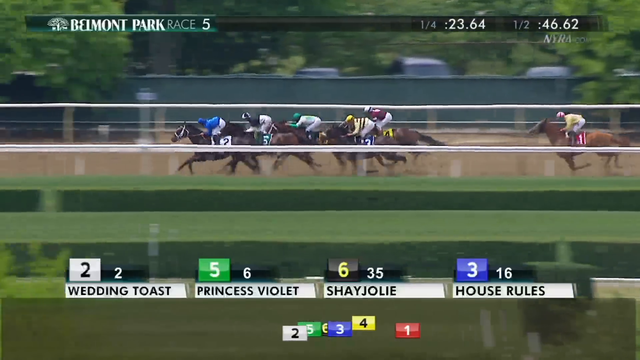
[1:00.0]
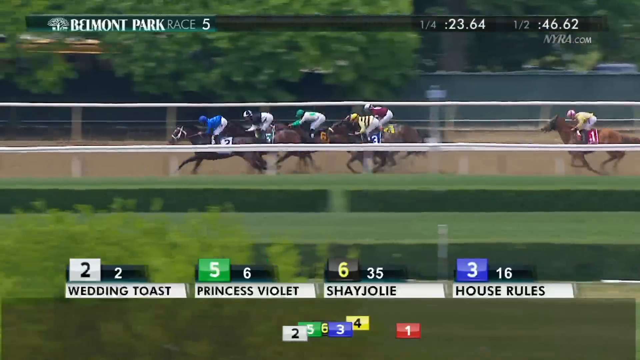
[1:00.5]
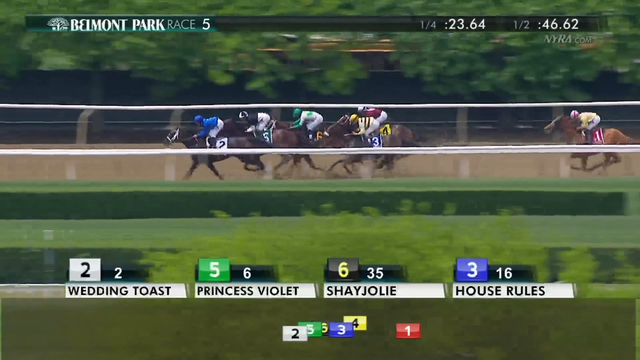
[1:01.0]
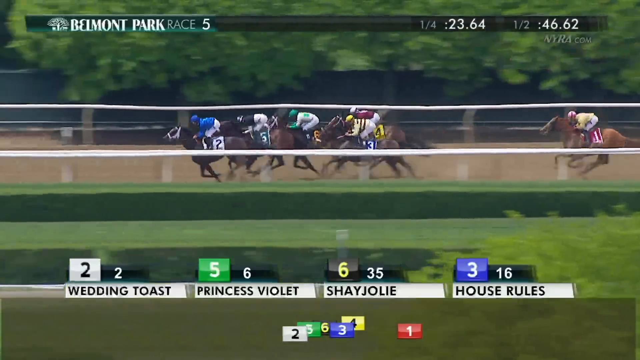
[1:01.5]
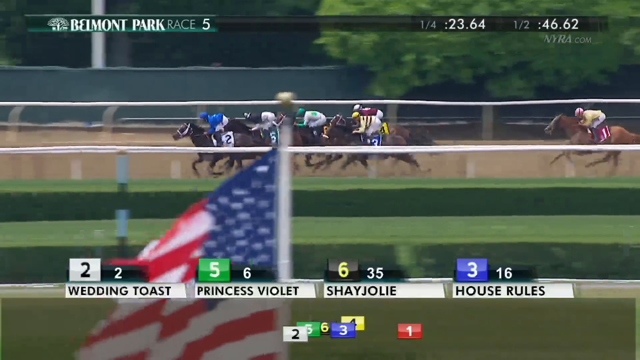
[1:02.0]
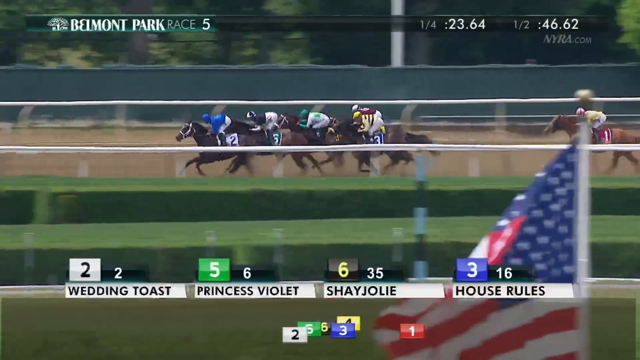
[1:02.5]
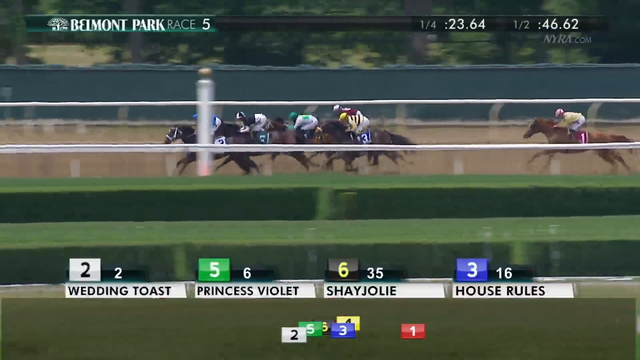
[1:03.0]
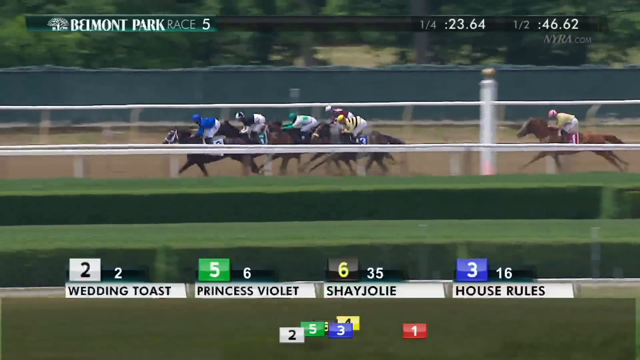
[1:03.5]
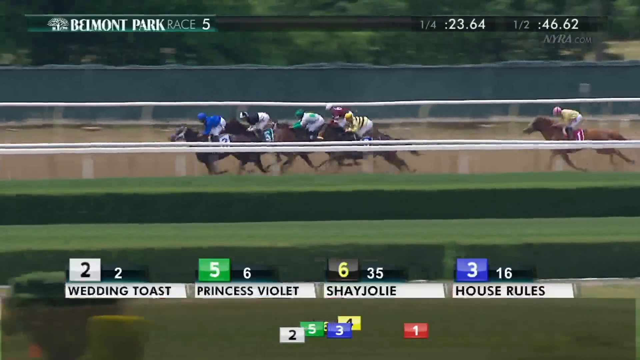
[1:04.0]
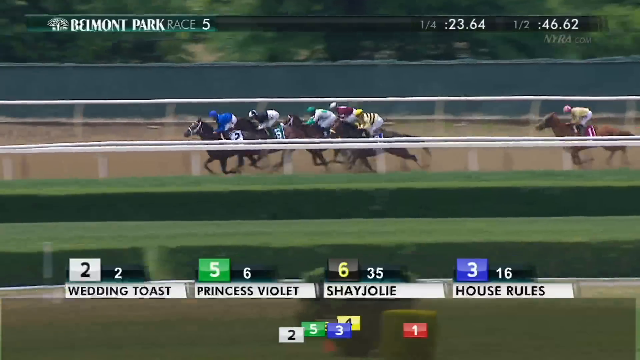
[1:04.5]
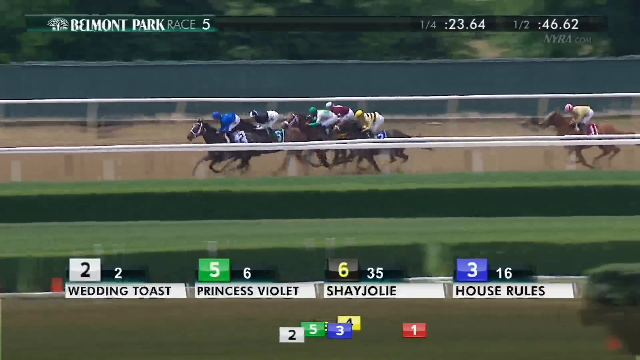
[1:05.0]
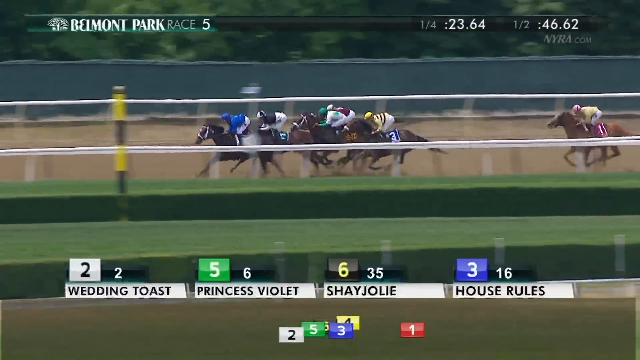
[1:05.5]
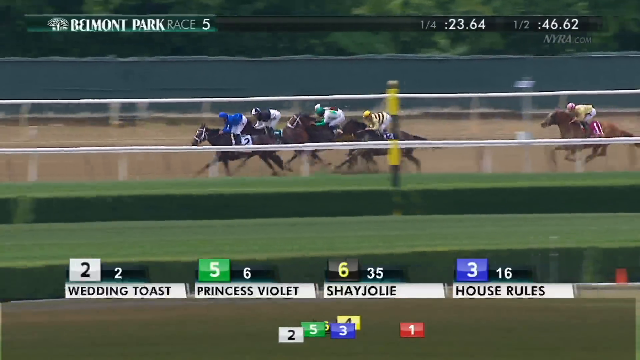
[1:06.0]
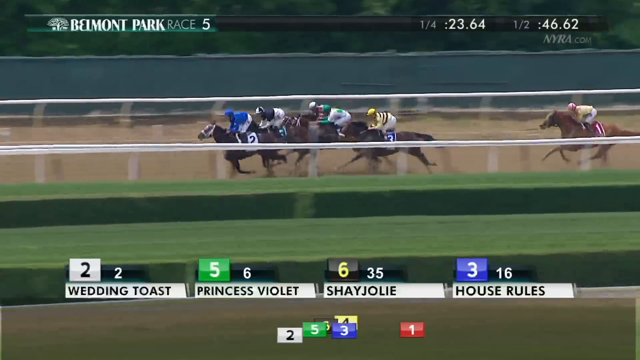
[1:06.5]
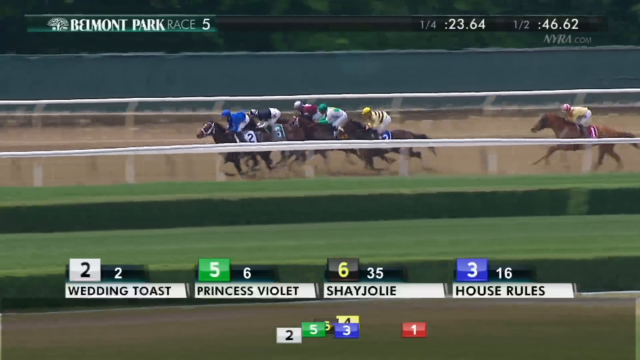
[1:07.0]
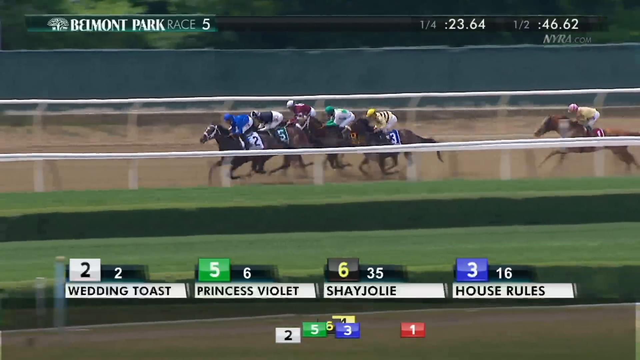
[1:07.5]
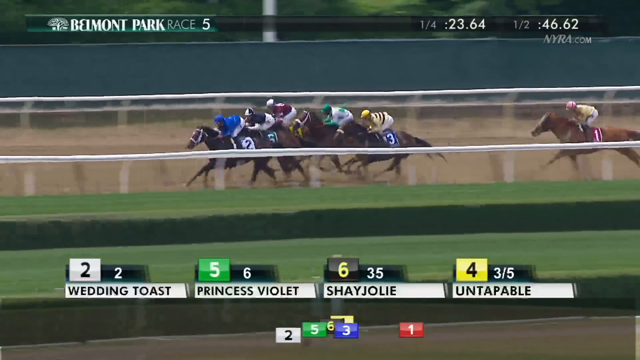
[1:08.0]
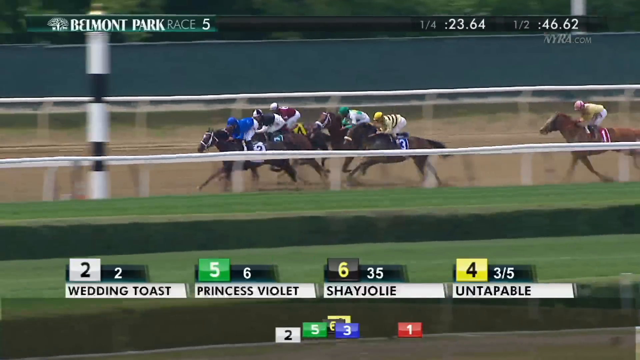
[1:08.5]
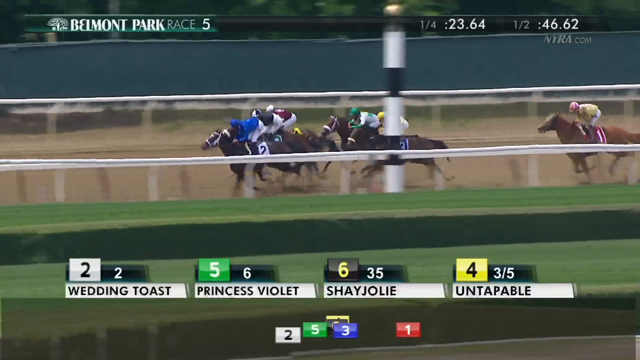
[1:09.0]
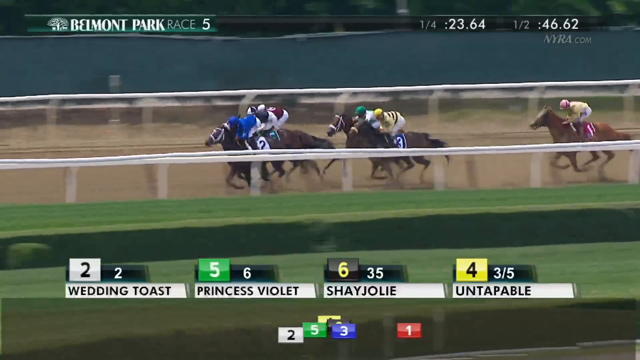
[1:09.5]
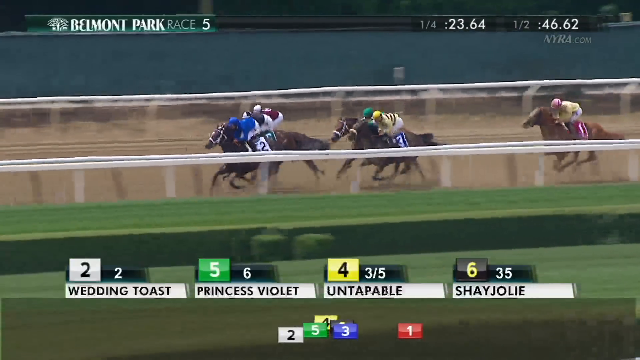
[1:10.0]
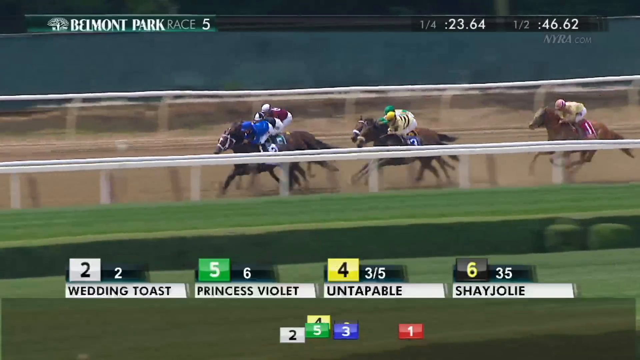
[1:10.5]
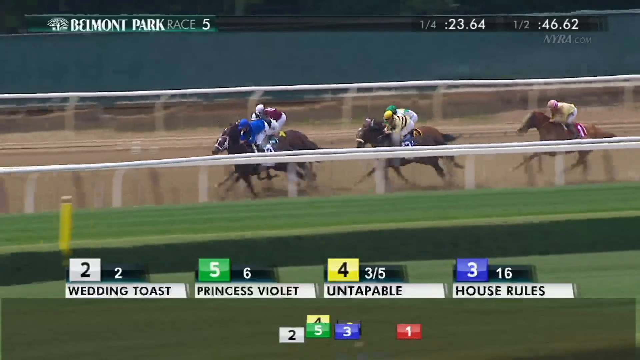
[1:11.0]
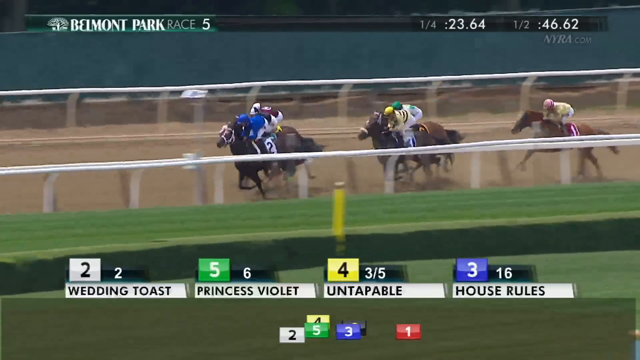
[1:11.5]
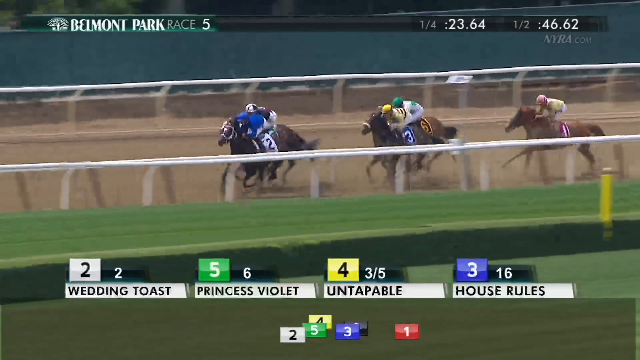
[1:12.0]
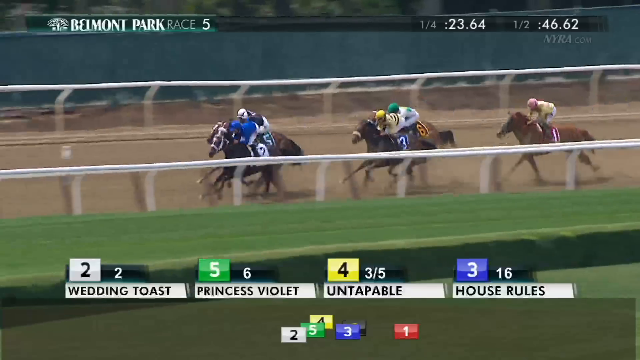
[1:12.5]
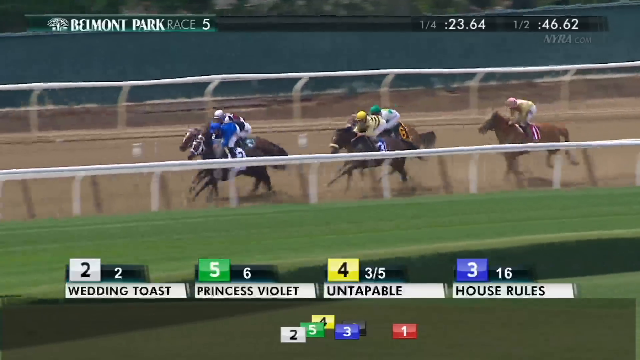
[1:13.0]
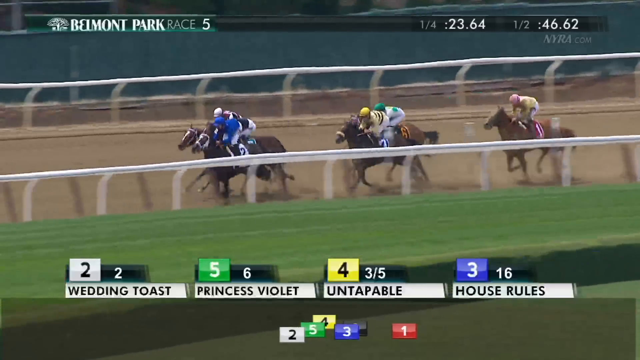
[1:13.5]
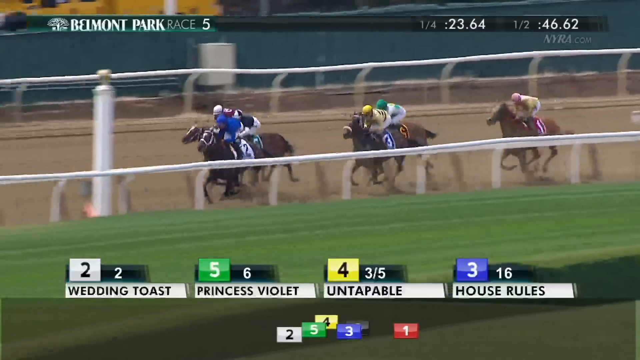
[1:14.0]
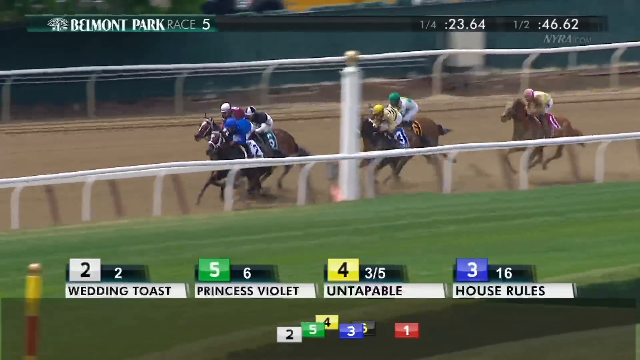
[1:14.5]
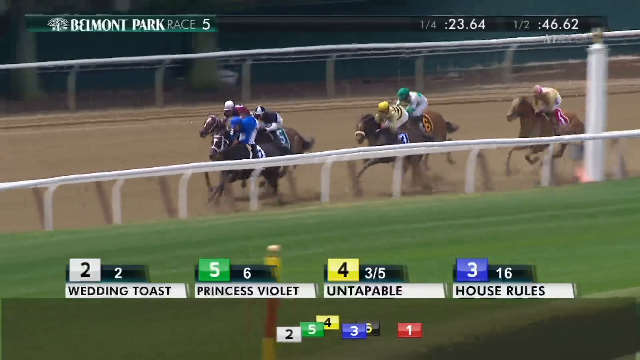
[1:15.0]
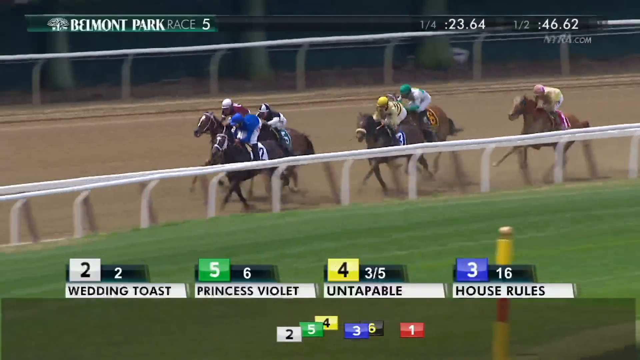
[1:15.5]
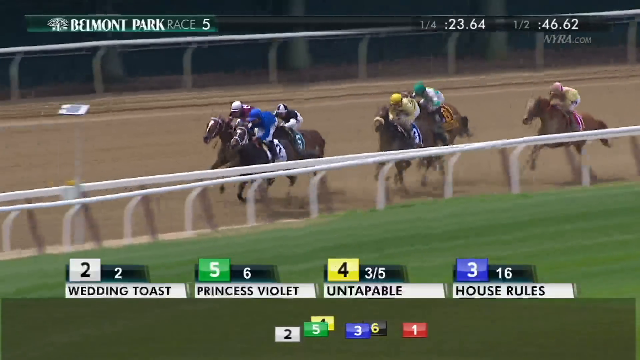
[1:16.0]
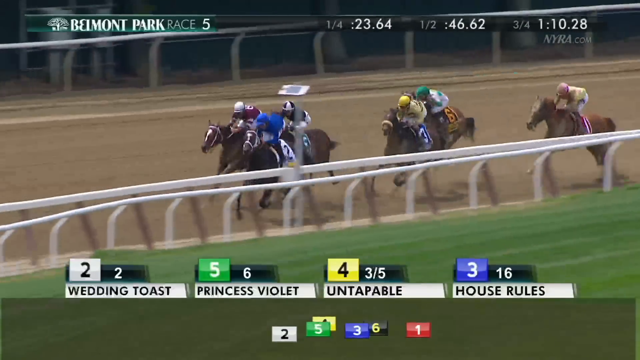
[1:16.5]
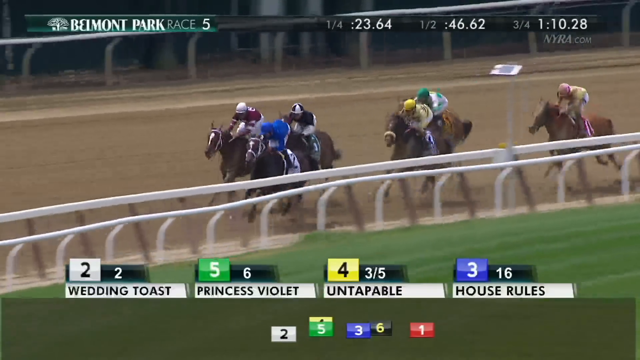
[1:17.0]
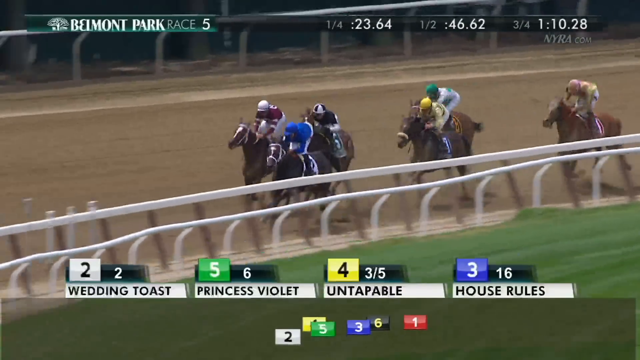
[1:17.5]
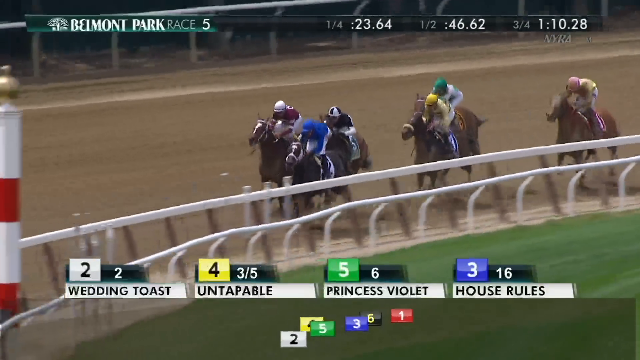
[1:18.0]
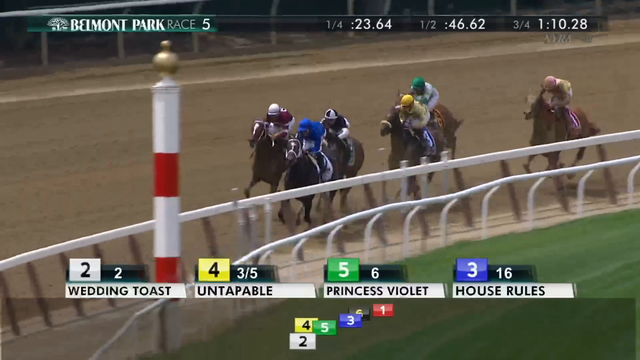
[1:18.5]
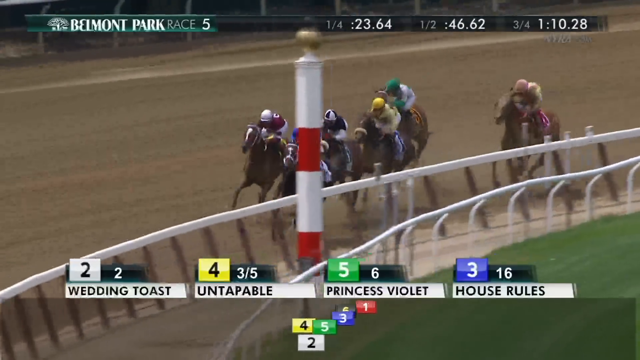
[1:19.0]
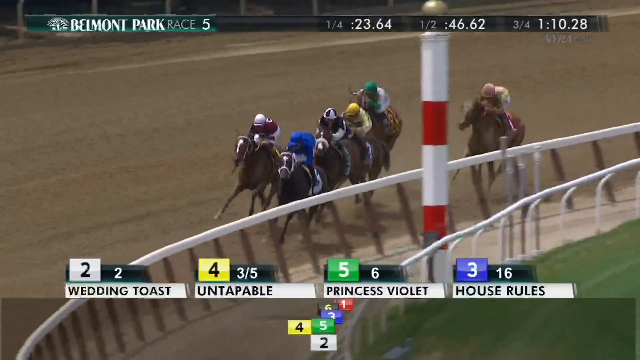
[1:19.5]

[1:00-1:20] Princess Violet, number five, has lost the lead to number two, Wedding Toast, which has opened a lead of almost a full length as they head into the turn back toward the stands. The elapsed time at the halfway point of the race is 46.62 seconds. Number six, Shayjolie, is in third place, and number three, House Rules, is in fourth. As they move toward the second turn, Wedding Toast is still in the lead, with number five, Princess Violet, threatening and putting on pressure. Untapable, number four, comes from behind and makes a move. The time for the first three quarters of the race is 1:10.28. The field is closely packed on a summer day at Belmont.